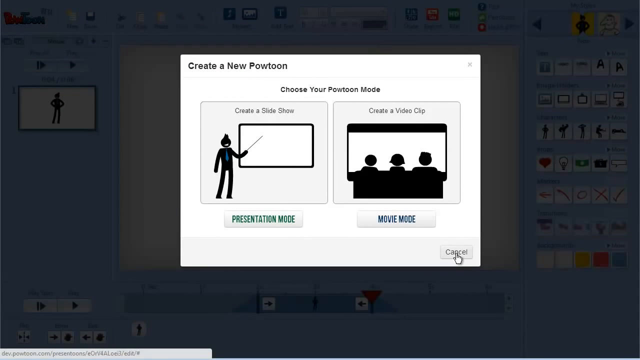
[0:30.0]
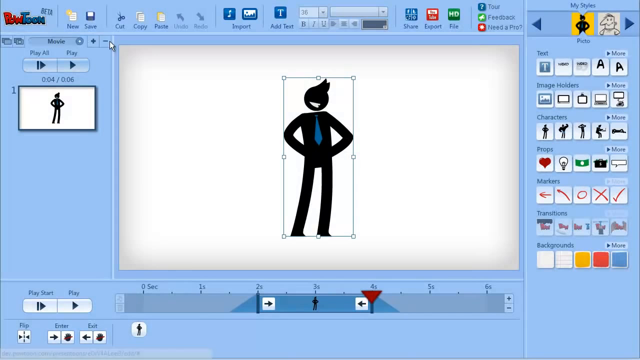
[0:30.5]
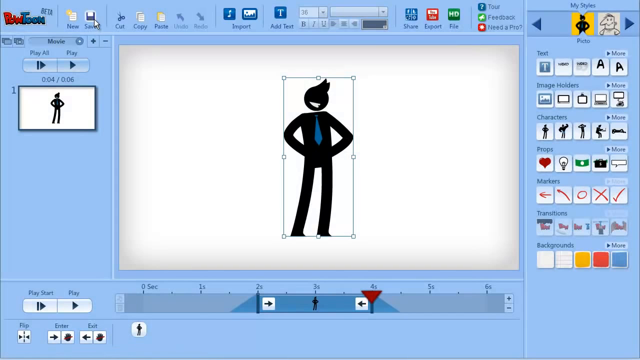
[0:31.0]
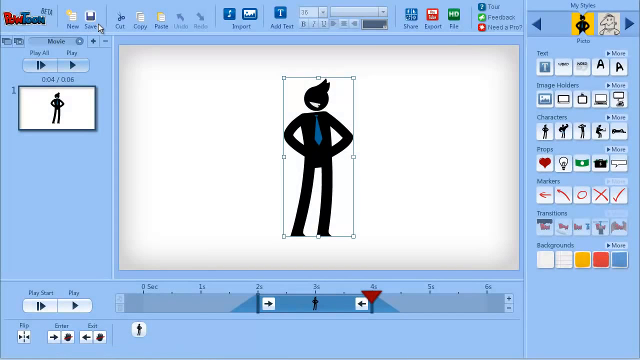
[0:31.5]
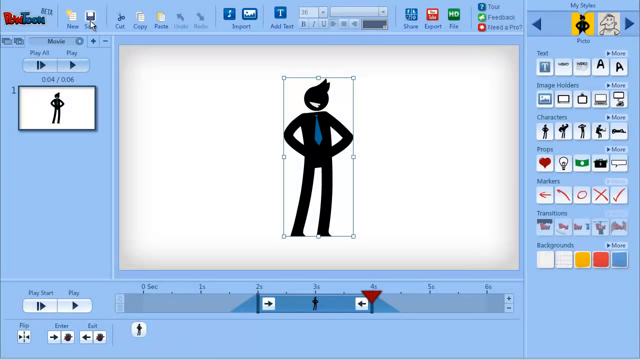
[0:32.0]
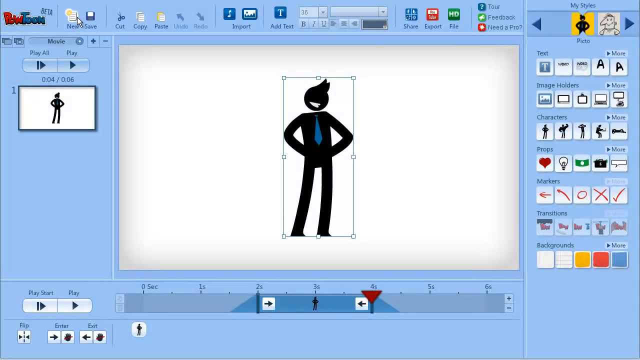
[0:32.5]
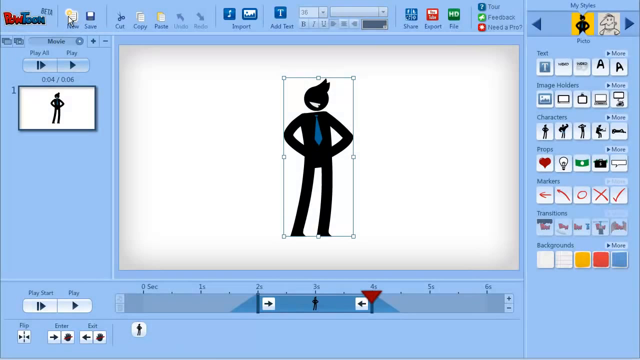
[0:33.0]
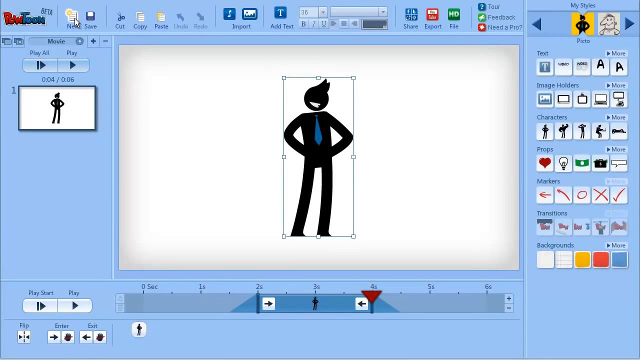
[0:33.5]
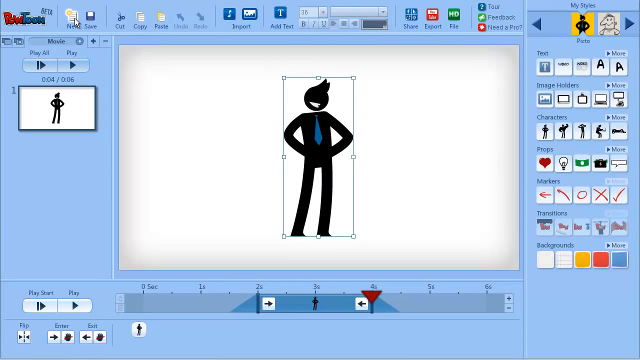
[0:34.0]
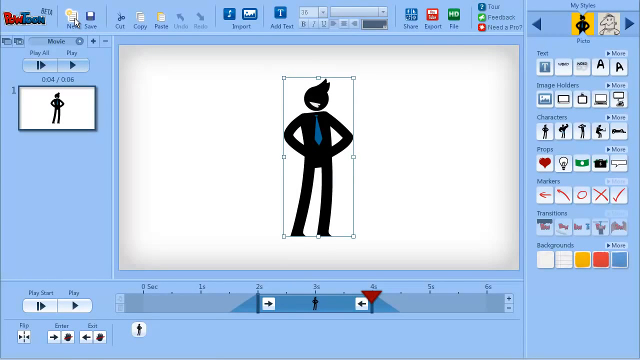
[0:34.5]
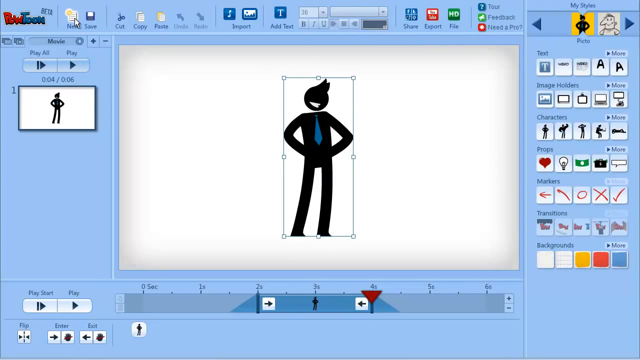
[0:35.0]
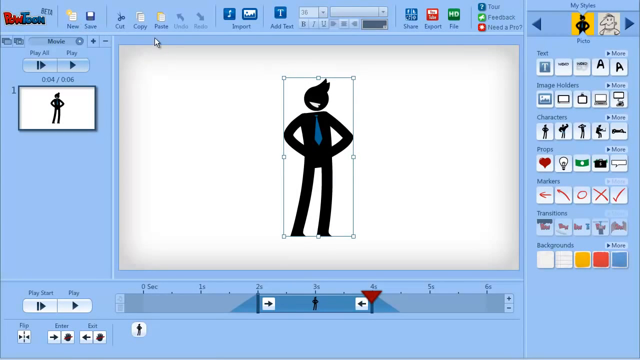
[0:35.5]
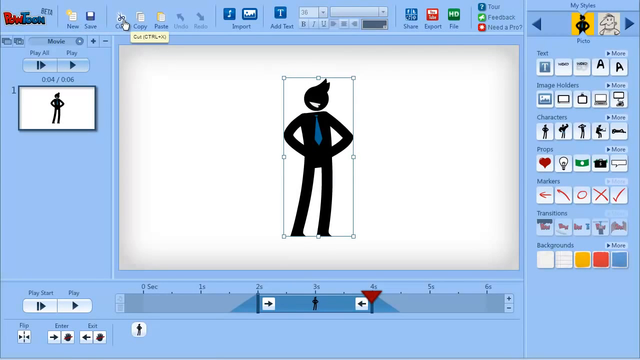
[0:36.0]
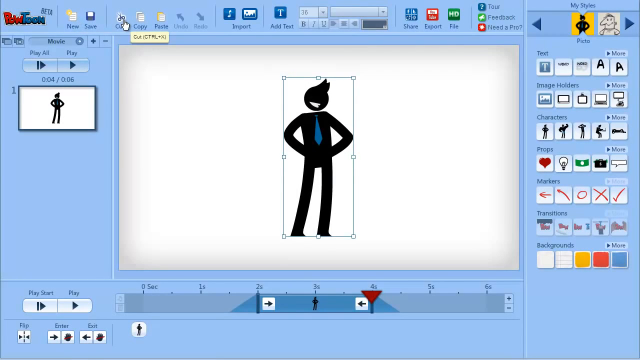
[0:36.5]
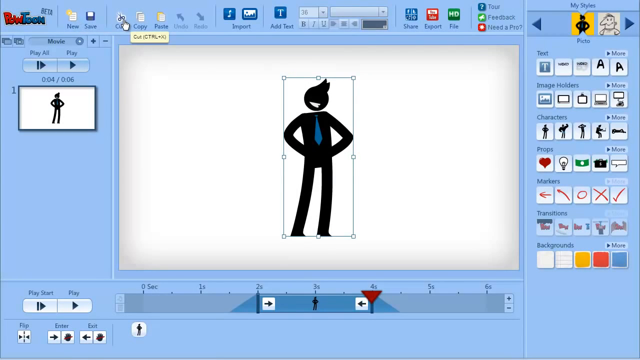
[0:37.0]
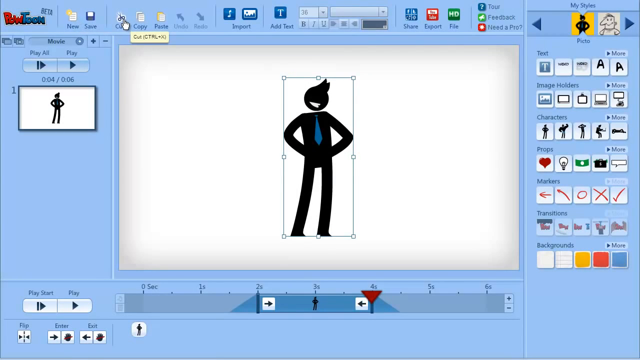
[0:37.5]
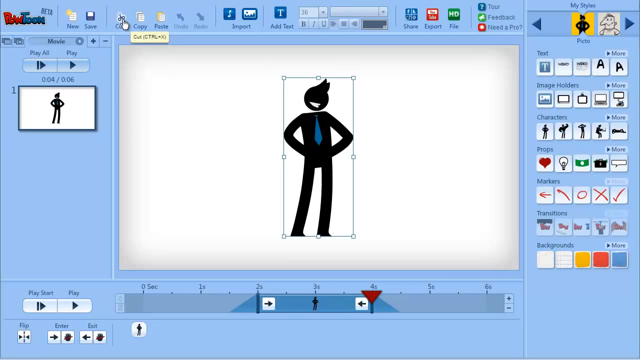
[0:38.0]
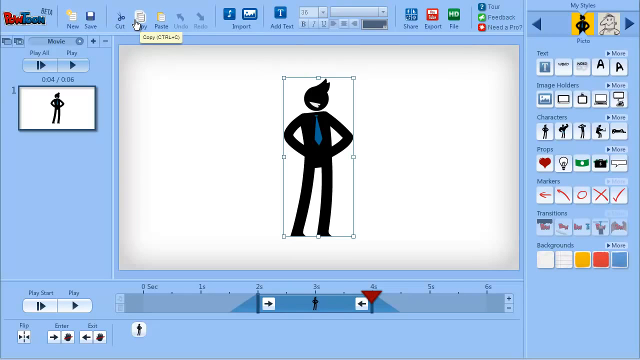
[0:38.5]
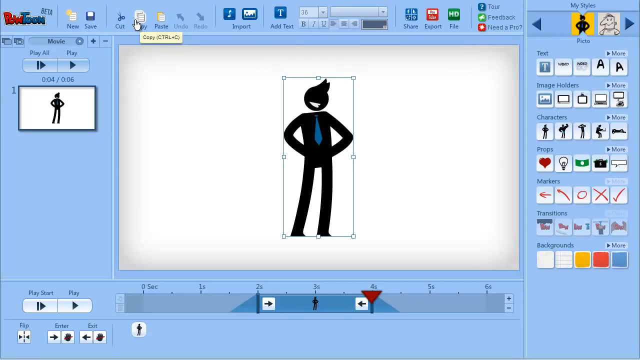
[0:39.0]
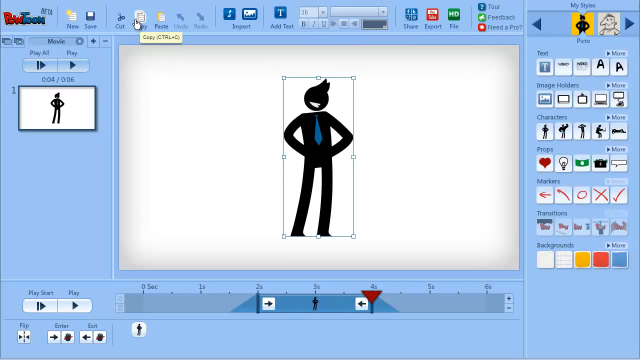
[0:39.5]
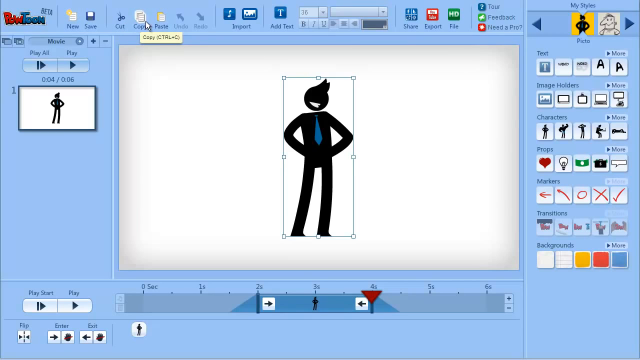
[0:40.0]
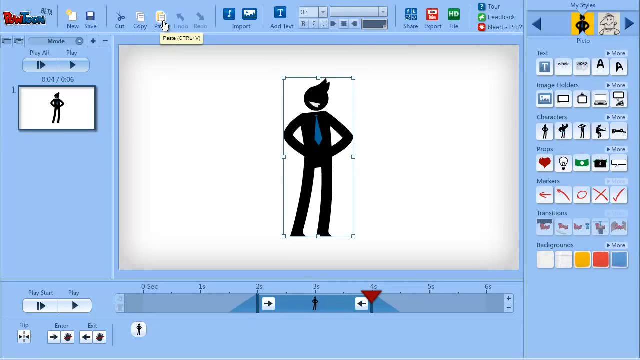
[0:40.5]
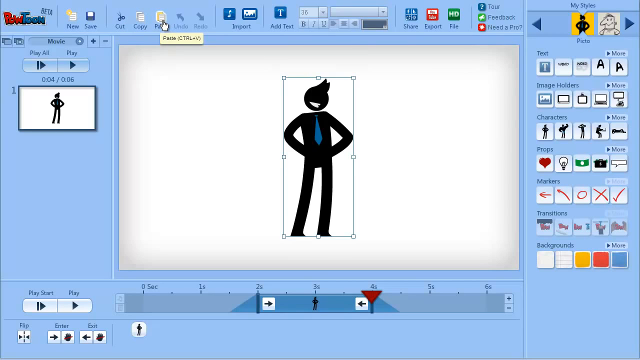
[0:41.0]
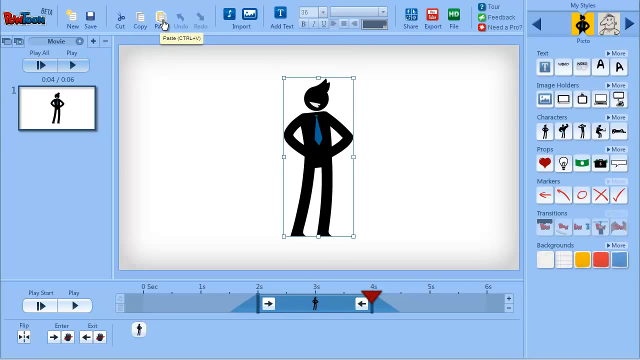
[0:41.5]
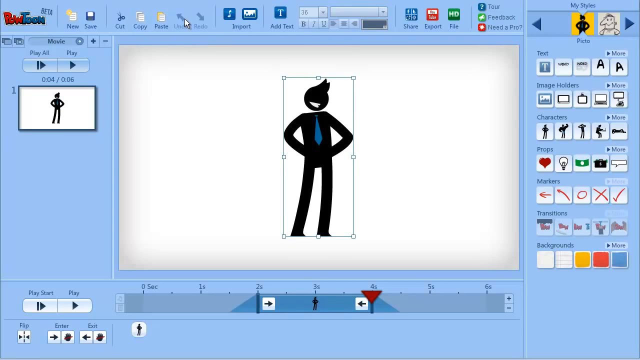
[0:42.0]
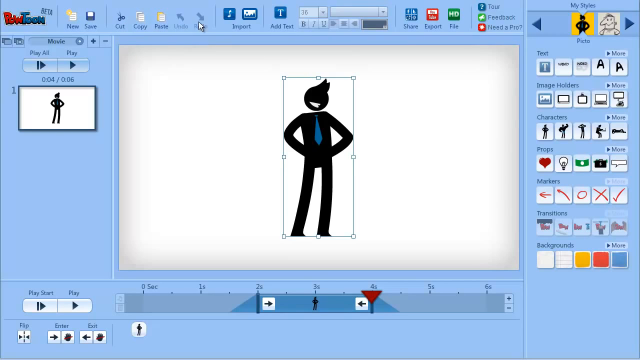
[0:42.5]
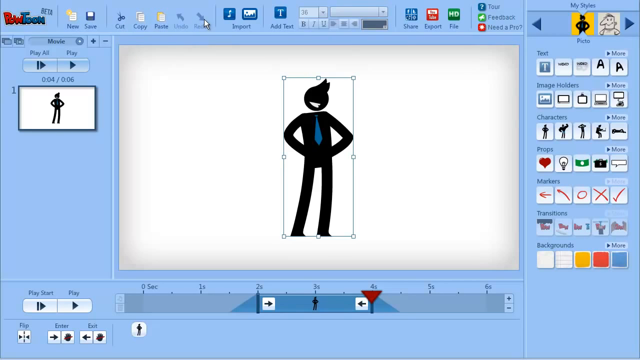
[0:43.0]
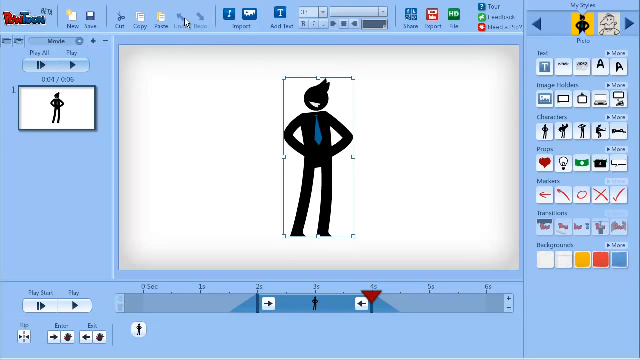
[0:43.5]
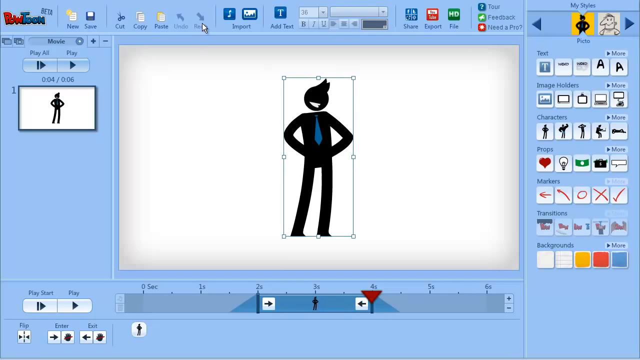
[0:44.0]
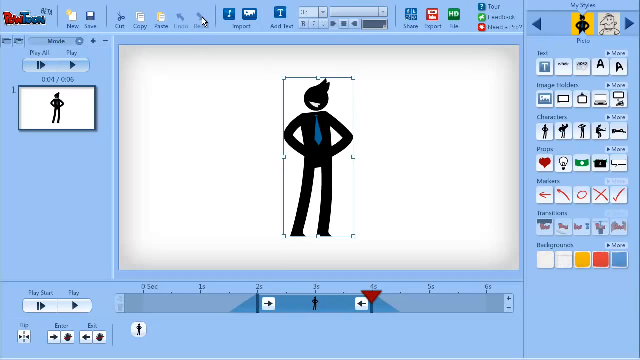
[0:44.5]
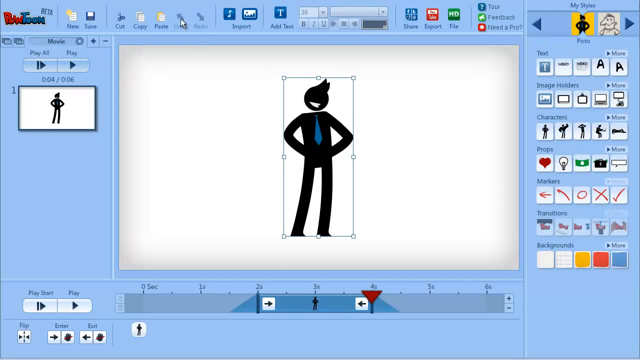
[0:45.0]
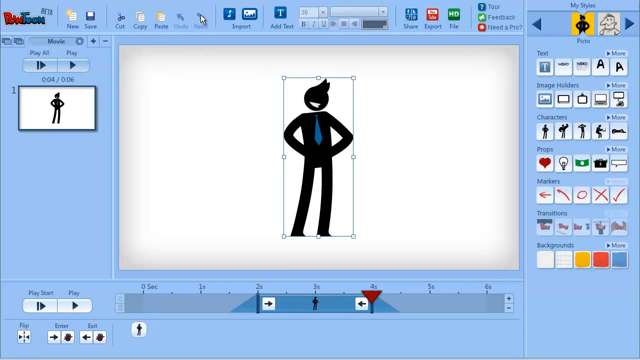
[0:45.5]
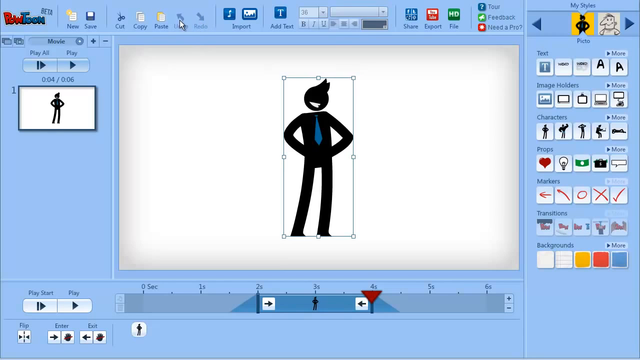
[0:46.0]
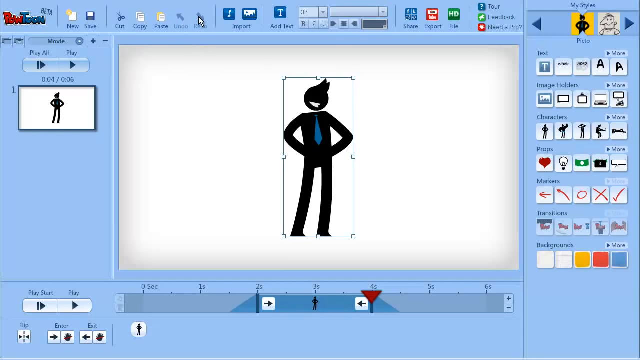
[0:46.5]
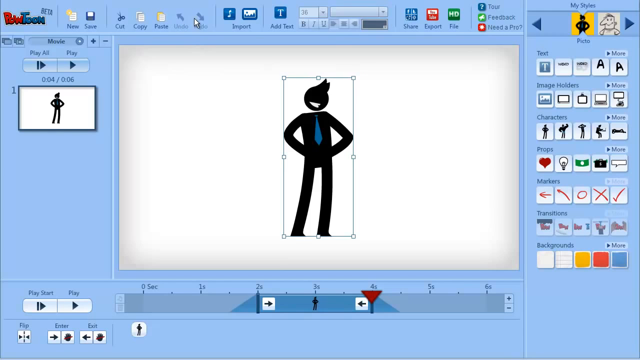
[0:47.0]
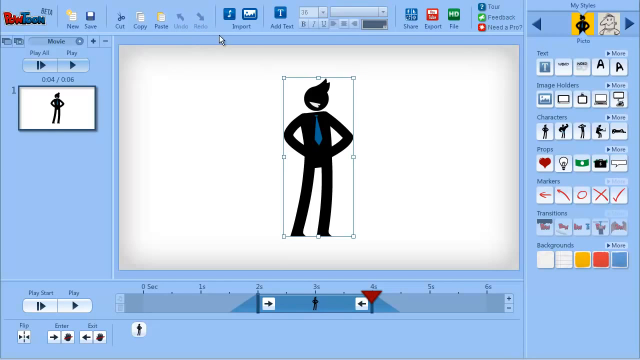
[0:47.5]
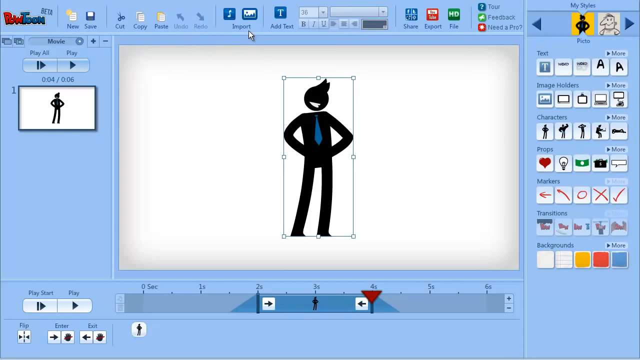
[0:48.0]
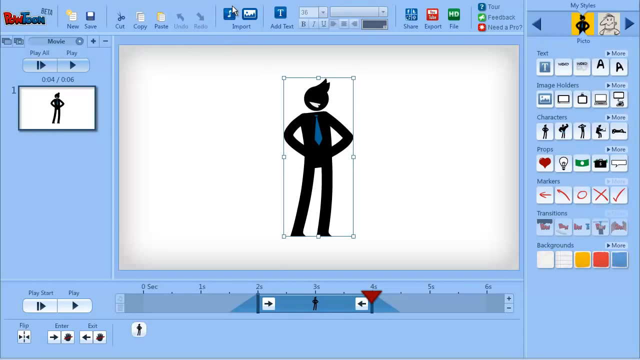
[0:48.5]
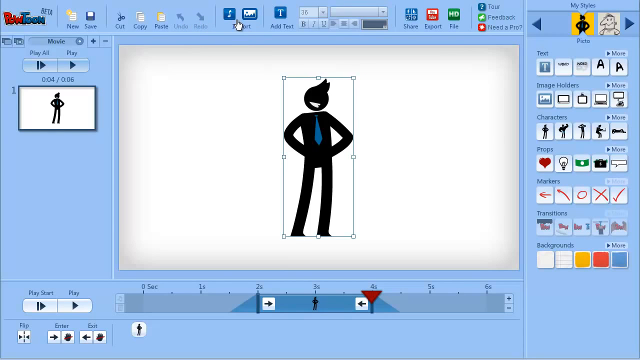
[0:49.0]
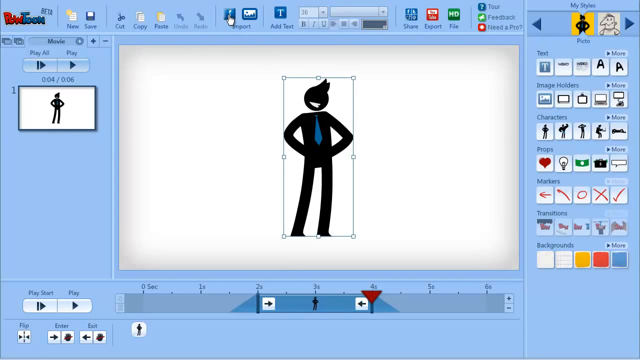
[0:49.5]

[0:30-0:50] The user changes the view type for the character between a presentation view and a movie view. The movie view depicts a movie screen seen past the backs of three people's heads. In the presentation view, the character holds a pointing stick and points at a blank screen. The user then checks out different options on the top bar of the screen, and a new presentation is created, apparently a PowerPoint, where the screen remains. The character in the middle of the screen is possibly the presentation character. Apart from a small drop-down, the screen shows the black thick stick character with the jack-in-the-box head, small tuft of hair and blue necktie in the middle.